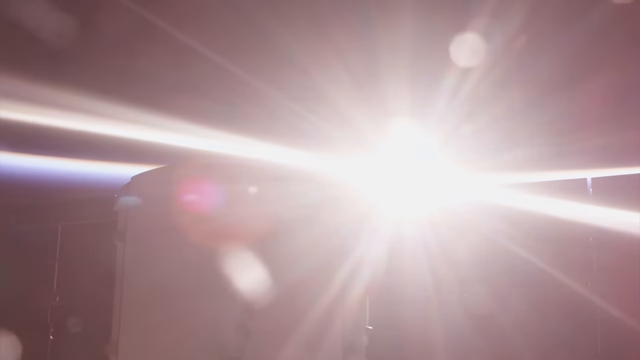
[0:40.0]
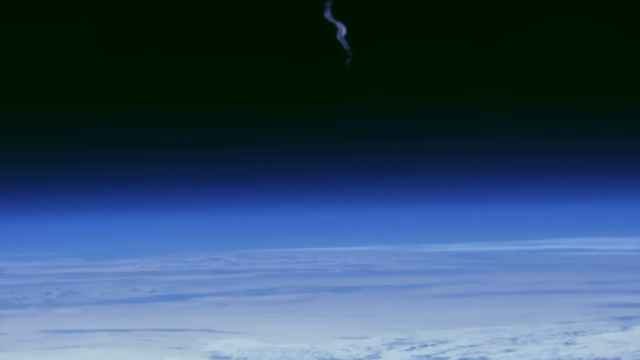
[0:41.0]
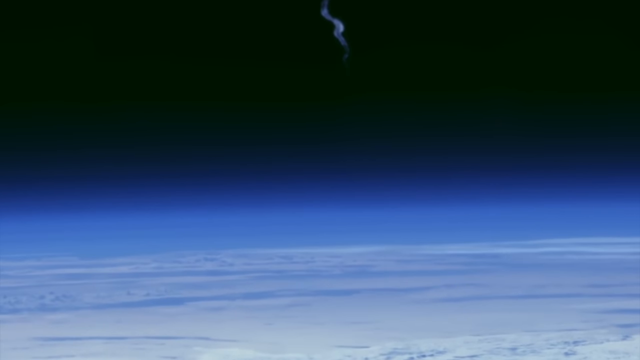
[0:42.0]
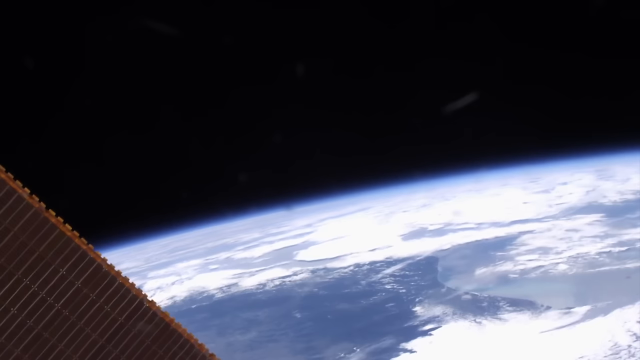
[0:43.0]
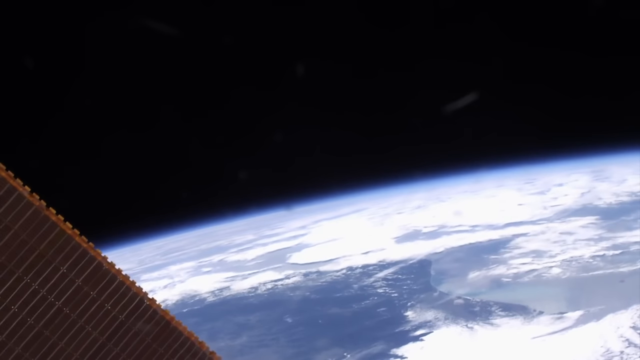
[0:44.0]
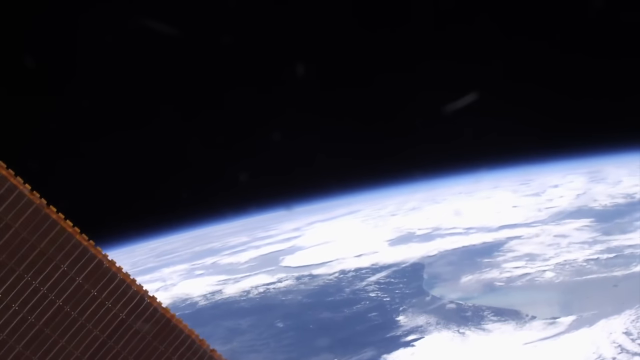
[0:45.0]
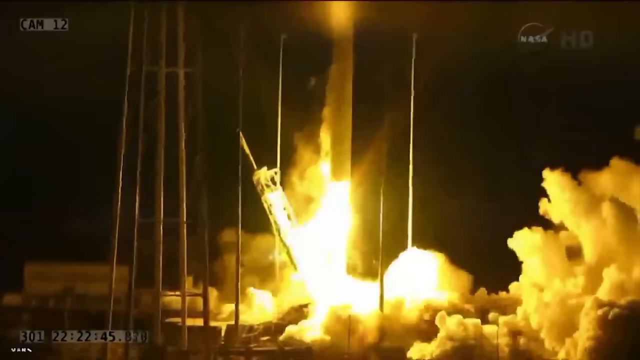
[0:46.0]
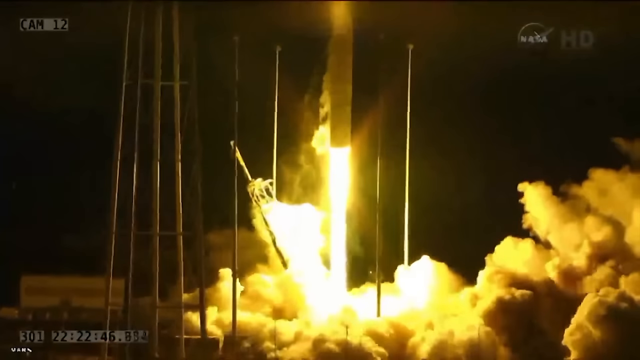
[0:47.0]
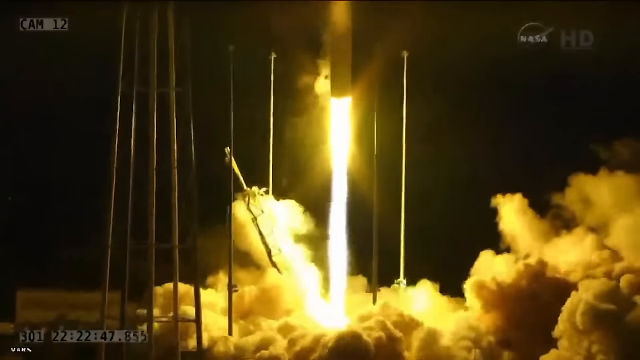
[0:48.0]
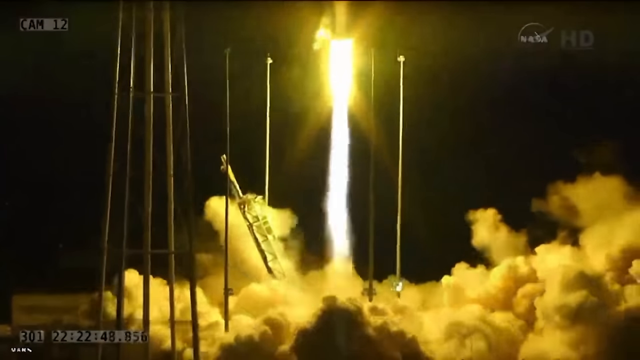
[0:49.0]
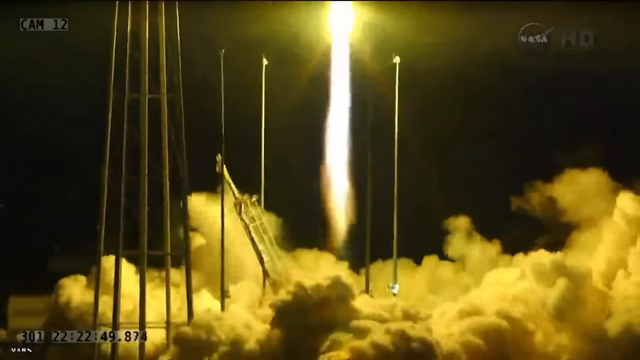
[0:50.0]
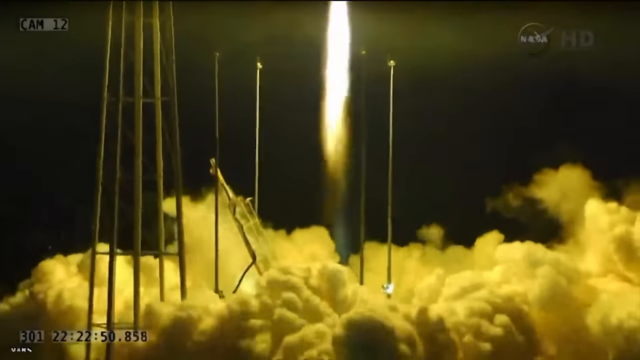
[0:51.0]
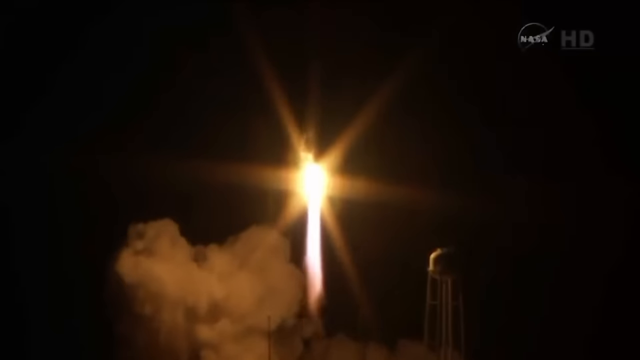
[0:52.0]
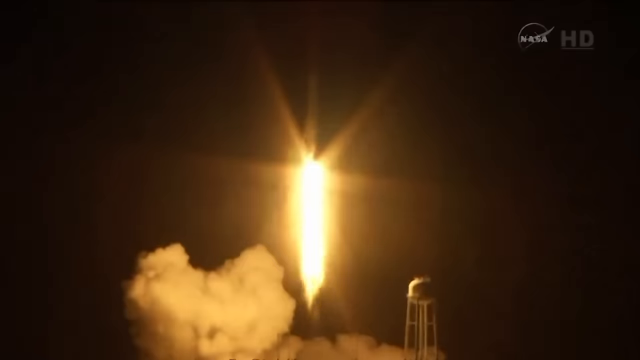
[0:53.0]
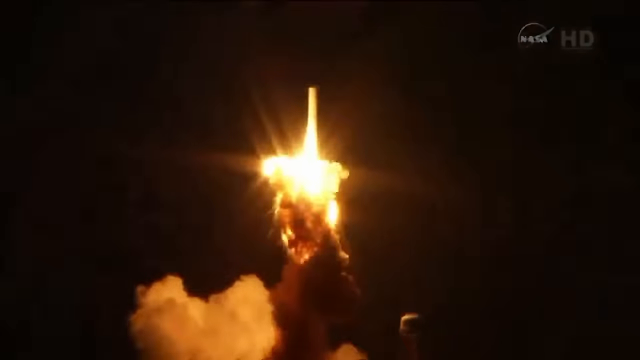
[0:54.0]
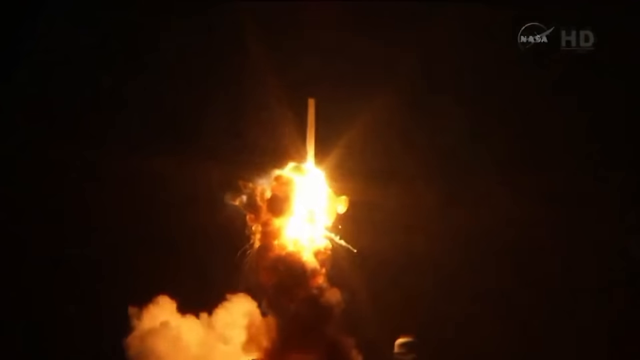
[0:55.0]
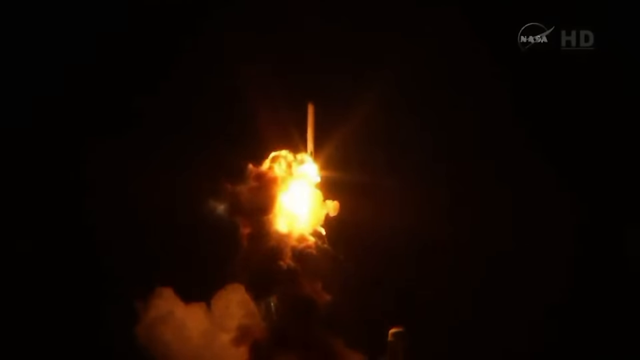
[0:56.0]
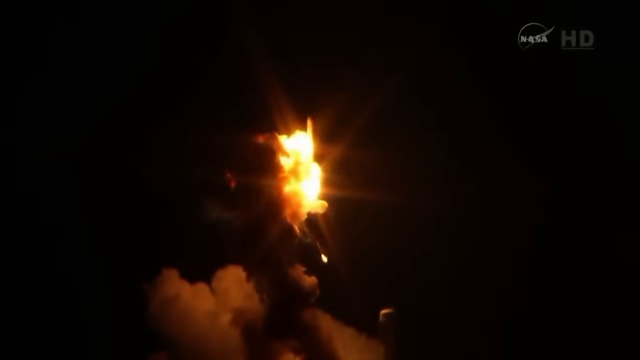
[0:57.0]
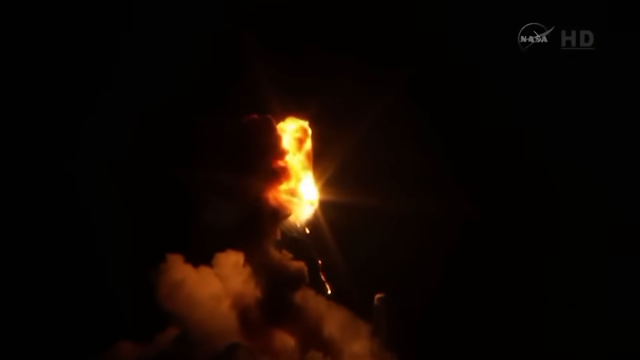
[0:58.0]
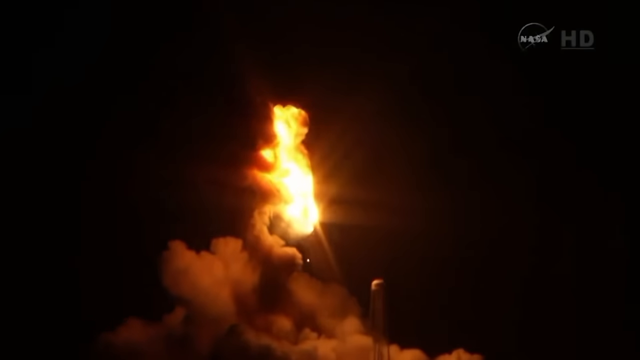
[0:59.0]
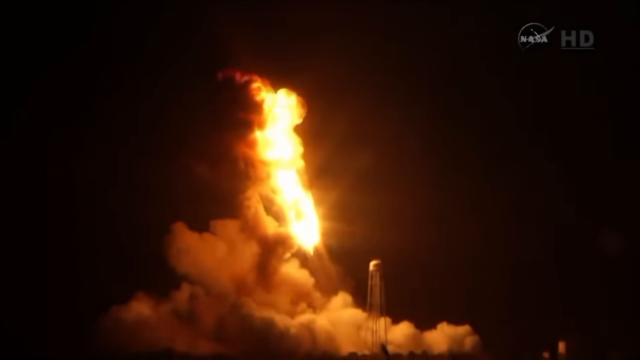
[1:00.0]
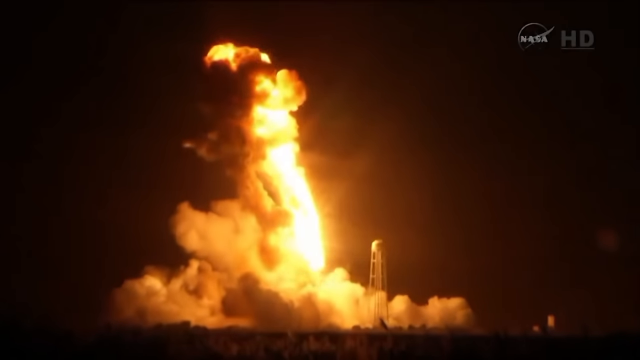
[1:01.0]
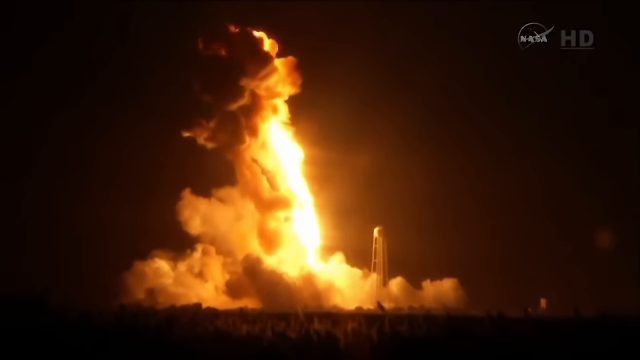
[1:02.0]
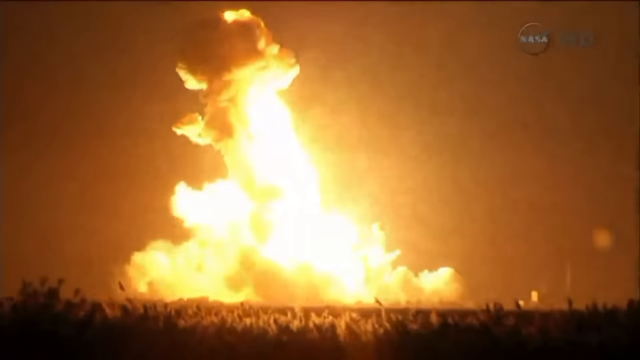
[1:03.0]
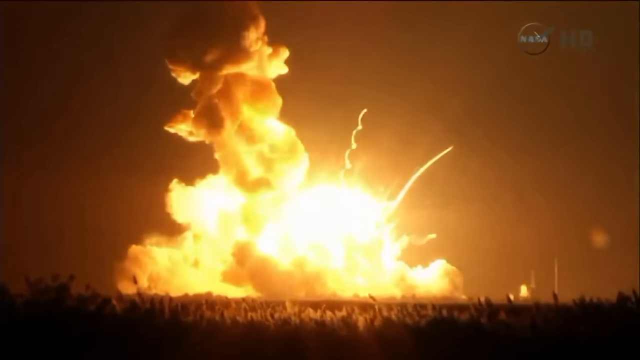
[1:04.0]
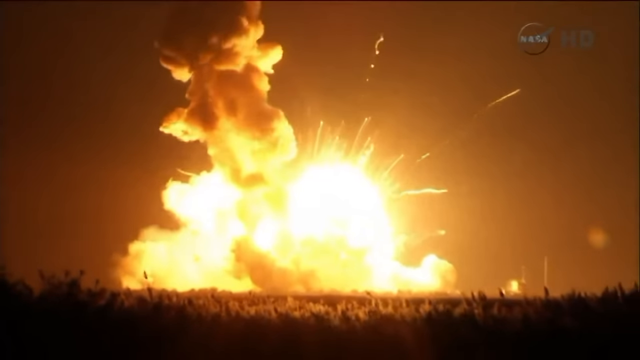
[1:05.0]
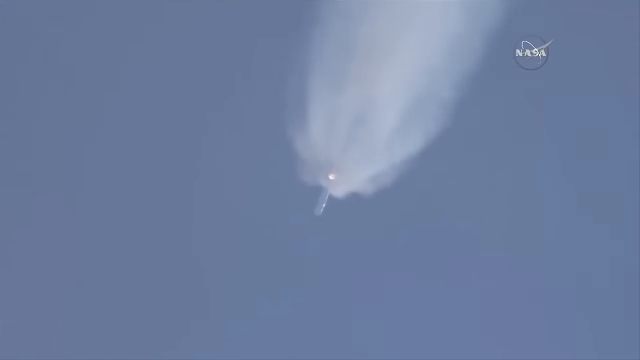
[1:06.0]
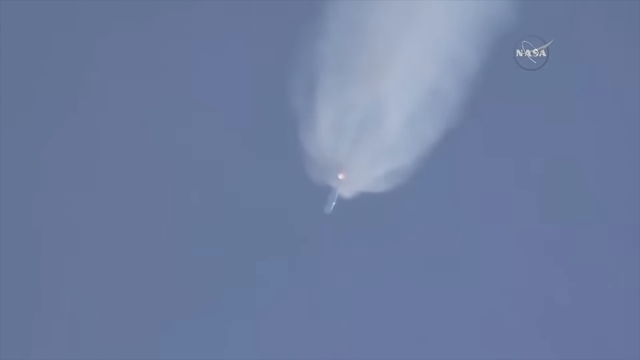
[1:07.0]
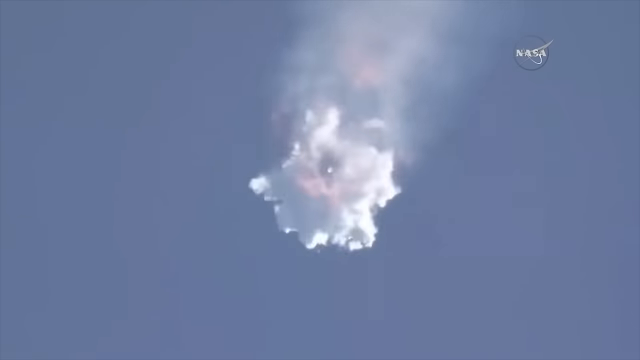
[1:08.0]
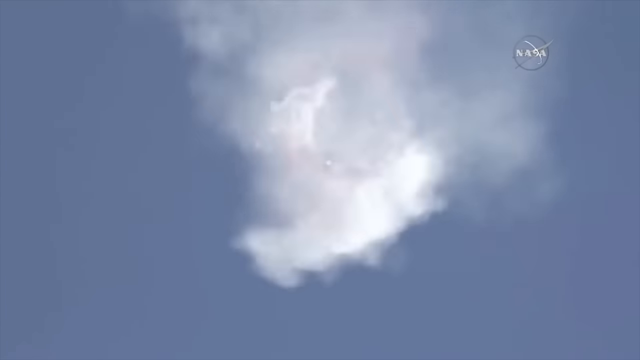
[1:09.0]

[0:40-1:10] A very bright light appears in the middle of the frame, looking like the sun over a horizon, with a black object at the bottom and space in the background; it flashes white and the scene changes. The view then appears to look over the top of clouds at the bottom, with black at the top. The scene changes very fast again: solar panels are at the bottom left, the horizon of the Earth is in the middle, black is at the top, and cloud and blue, the Earth, are at the bottom right. In another scene, apparently at night, a rocket takes off, going upward at the top middle with fire coming down below it and a lot of smoke at the bottom and bottom right. It rises and goes off screen, and the view zooms out. What looks like another scene shows a bright light of fire pointing downward; it becomes very bright, goes up, stays stationary, then slowly falls back down in a ball of fire into the huge thick cloud of smoke it left behind, and bursts into a huge explosion with debris flying everywhere. Another shot looks up from below at a white rocket flying away to the left against a light blue sky; suddenly a lot of smoke comes out of it and it bursts into smoke.